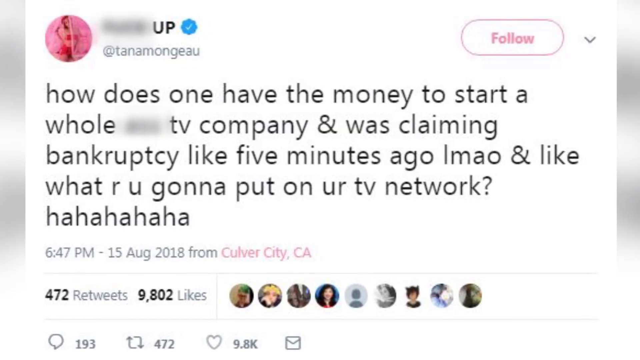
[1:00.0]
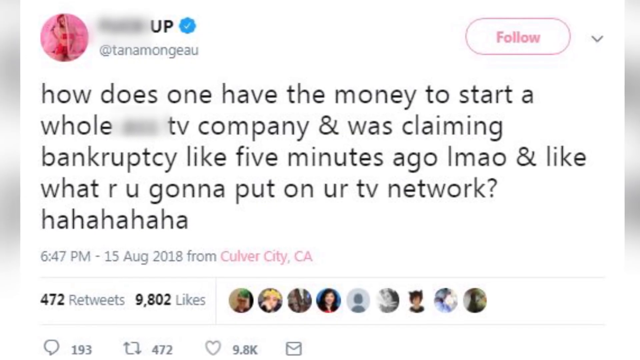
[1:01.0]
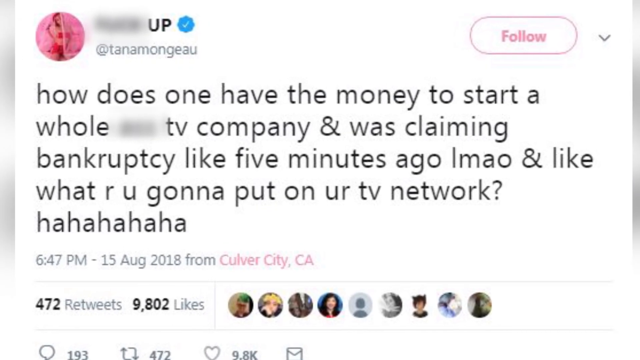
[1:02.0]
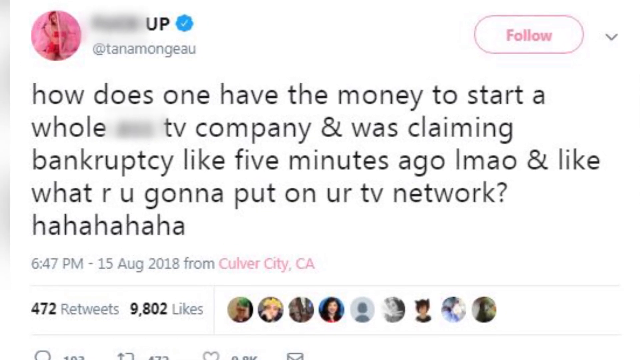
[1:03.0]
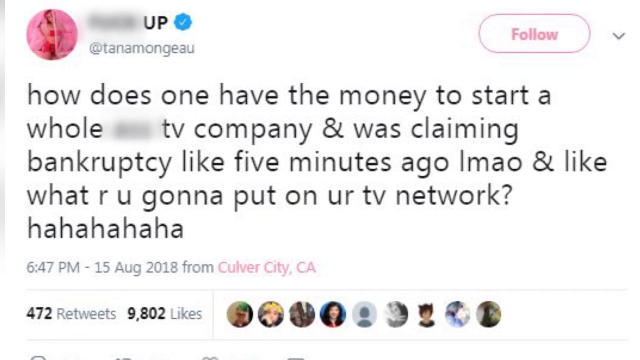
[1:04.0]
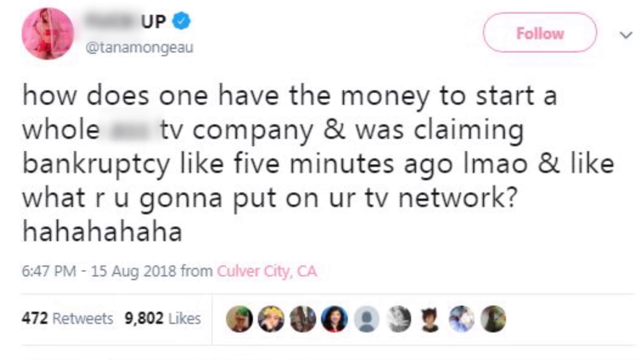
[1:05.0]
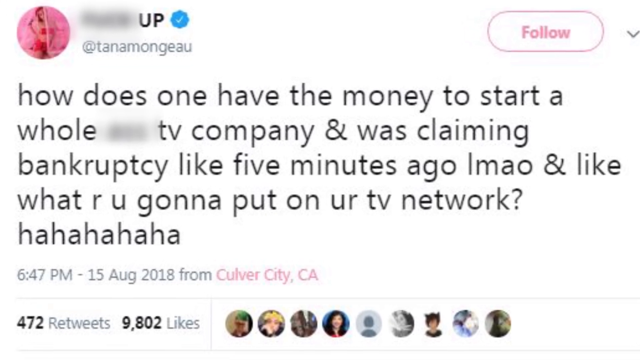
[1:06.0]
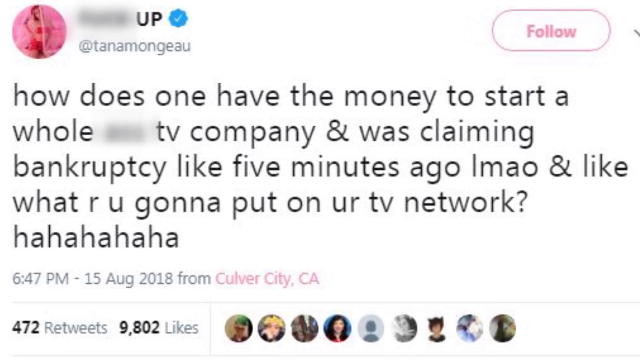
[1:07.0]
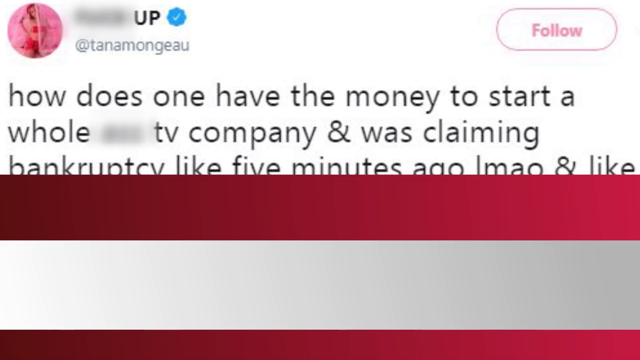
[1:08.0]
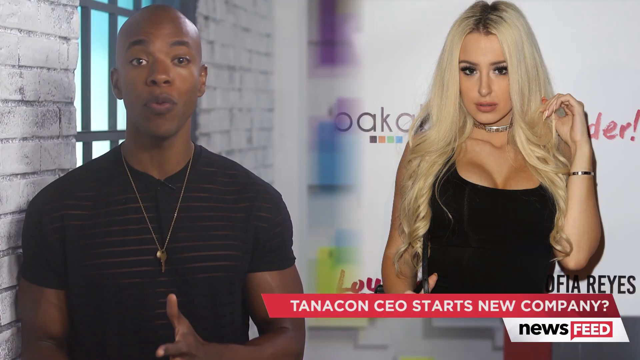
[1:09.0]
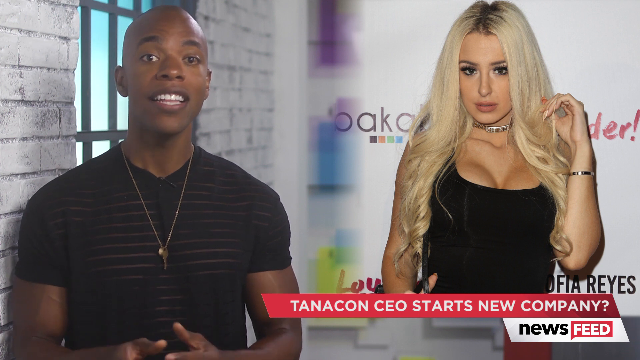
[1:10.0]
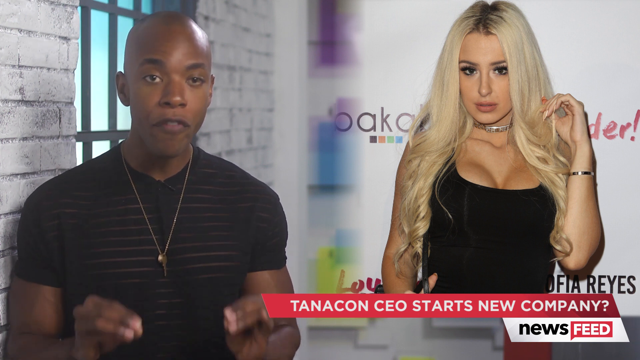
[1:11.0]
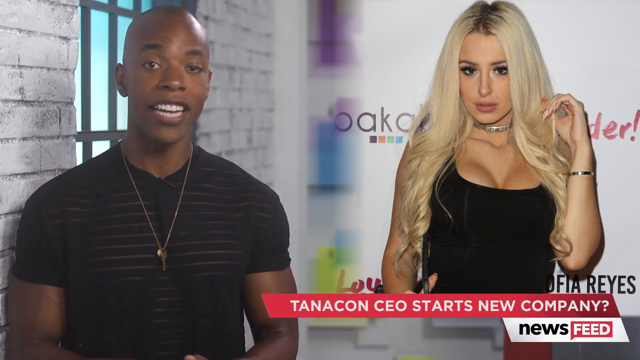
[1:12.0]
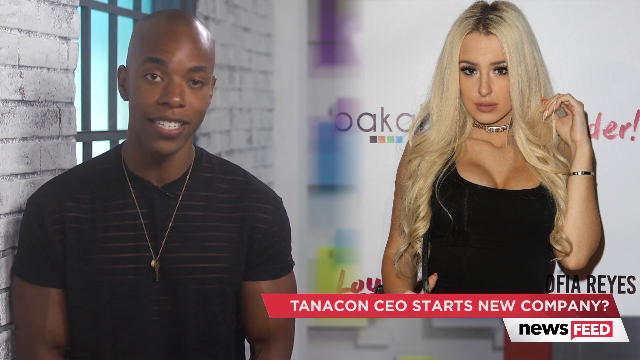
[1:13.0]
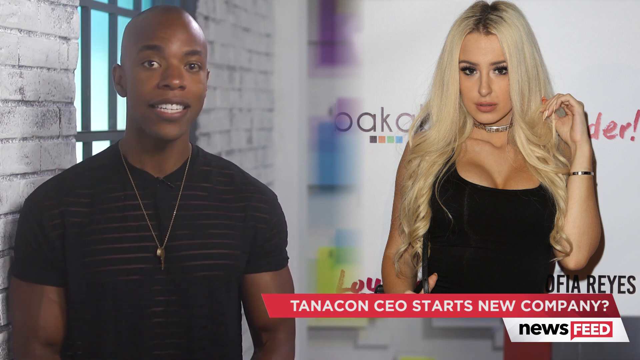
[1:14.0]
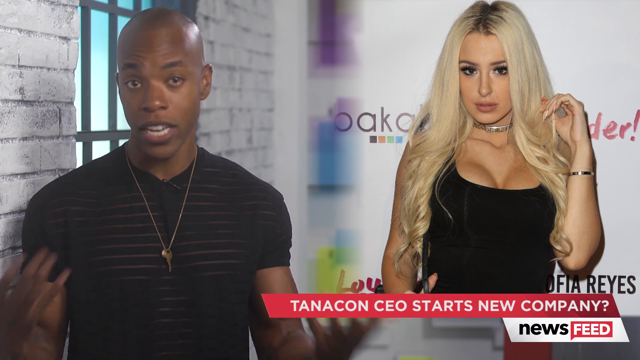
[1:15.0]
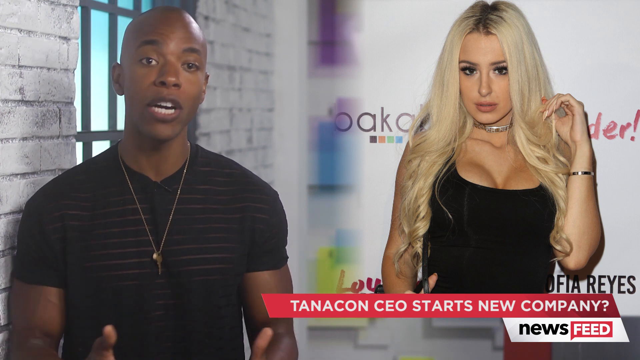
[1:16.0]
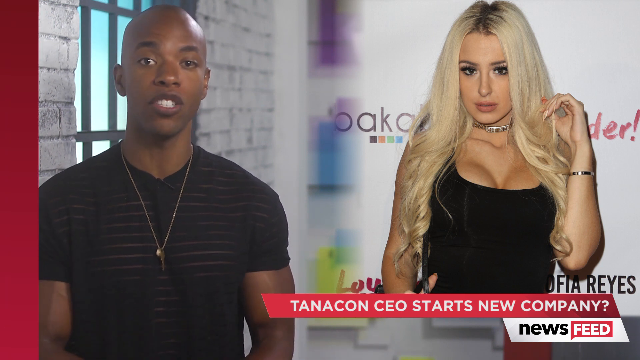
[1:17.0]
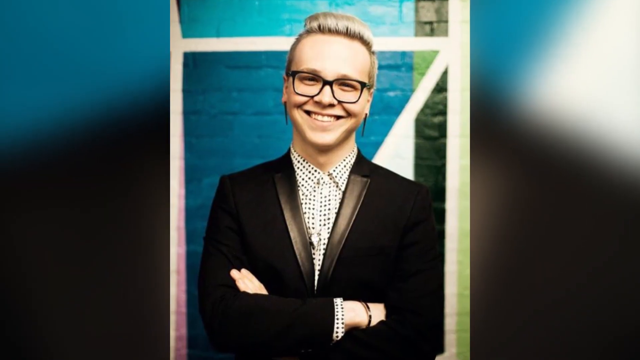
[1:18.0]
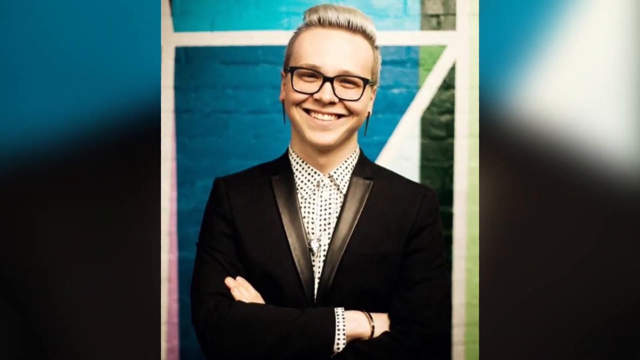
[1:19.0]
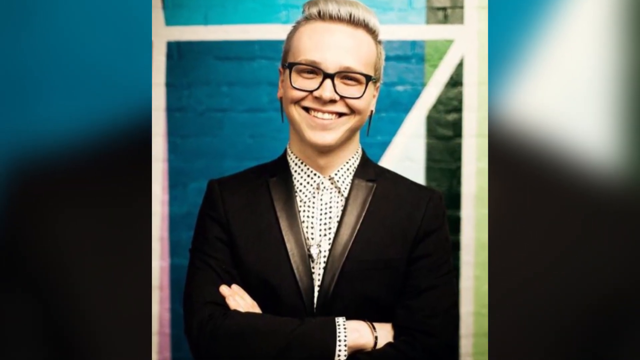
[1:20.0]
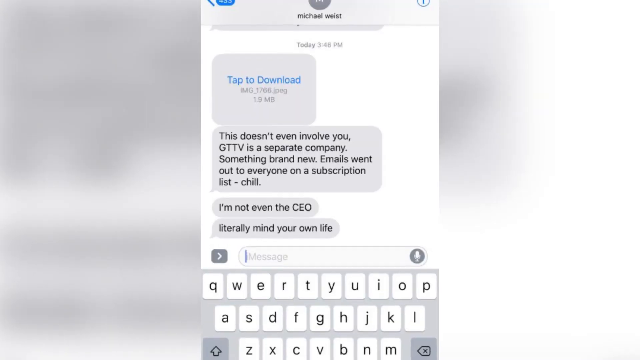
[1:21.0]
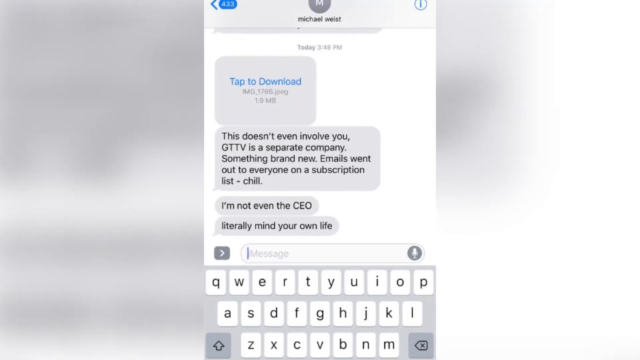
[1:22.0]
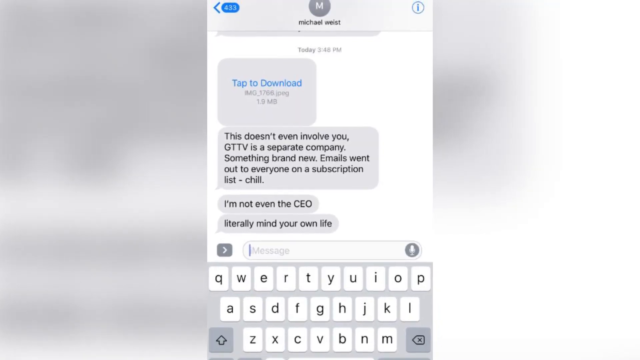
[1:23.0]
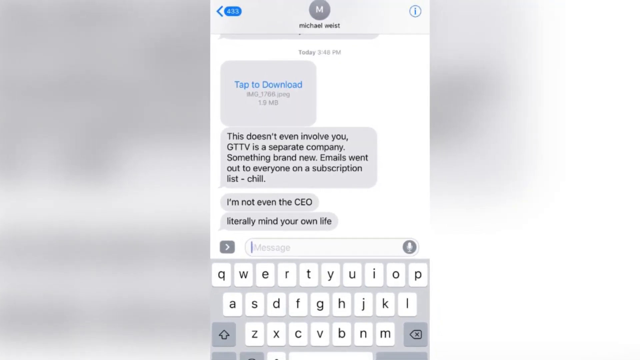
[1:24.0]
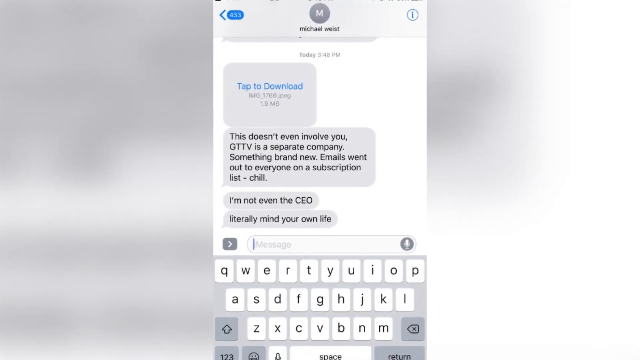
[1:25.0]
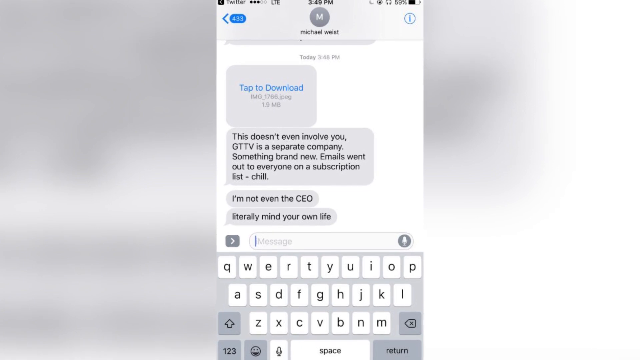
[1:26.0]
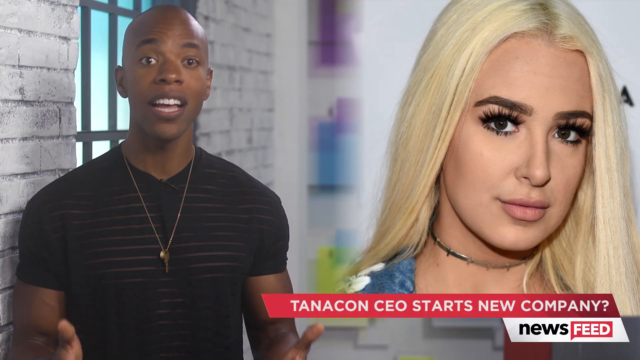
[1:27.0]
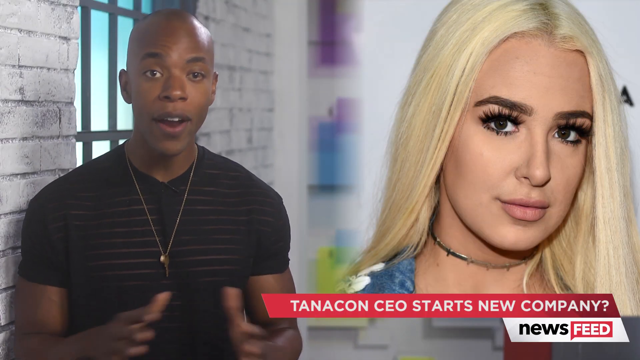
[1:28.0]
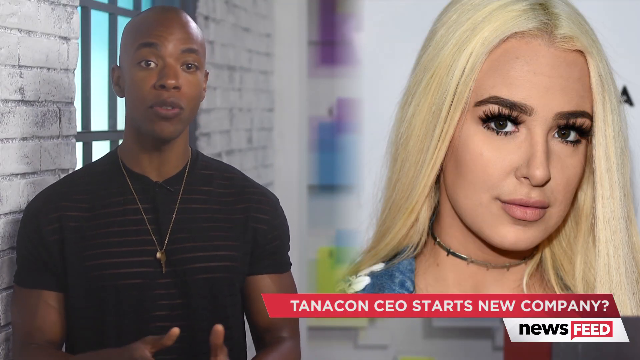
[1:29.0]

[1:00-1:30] A tweet reads: "how does one have the money to start a whole TV company and was claiming bankruptcy? Like five minutes ago lmao and like what are you gonna put on your TV network? ha ha ha ha ha." It shows the usual tweet elements: the time and date, the social media handle at the top, a little pinkish profile picture to the left, and a blue check mark. The sender cannot be seen; only a capital "UP" in black is visible, with the first part covered. The red and white transition follows. Next, the man is back on the left in front of the window, and on the right is a long-haired blonde woman, who might be the same one who was talking on the couch. She wears a black tank top showing a bit of cleavage, a silver choker, and a silver bracelet on her left hand, which is raised and touching her hair. At the bottom is the same red banner, "Tanacon CEO starts new company," with the newsfeed logo. The view switches back to him in the tuxedo jacket. Then what look like someone's text messages on a phone appear, with the keyboard underneath; they seem to mention GTTV, a separate company, and say "I'm not even the CEO. Literally mind your own life." The video returns to the commentator on the left and the woman on the right, now in close-up, showing massive fake lashes, long straight blonde hair, the silver choker, and the same headline underneath.